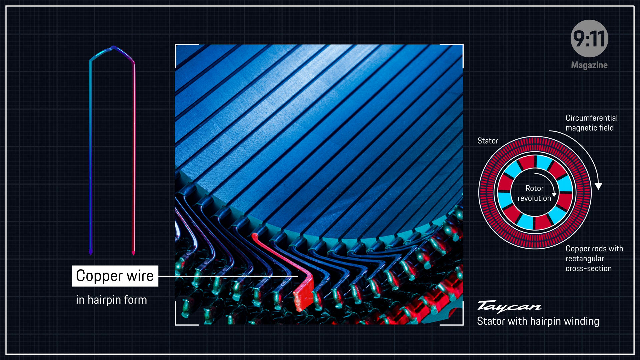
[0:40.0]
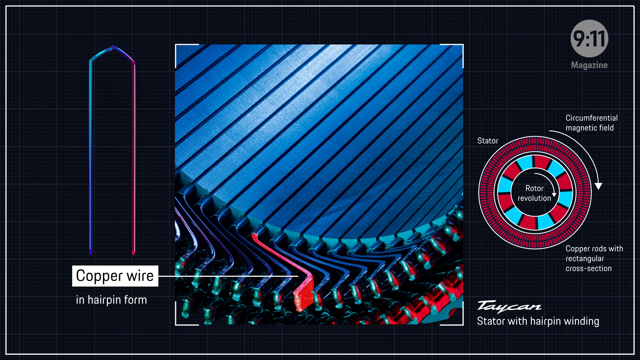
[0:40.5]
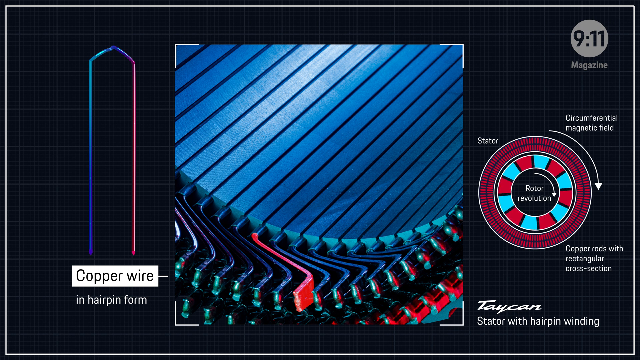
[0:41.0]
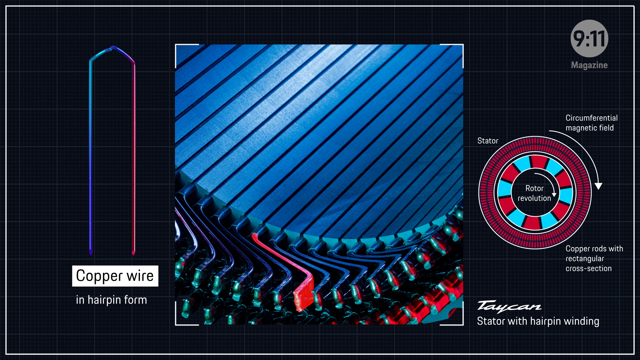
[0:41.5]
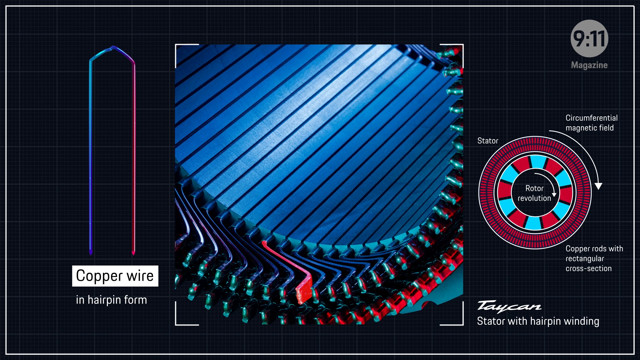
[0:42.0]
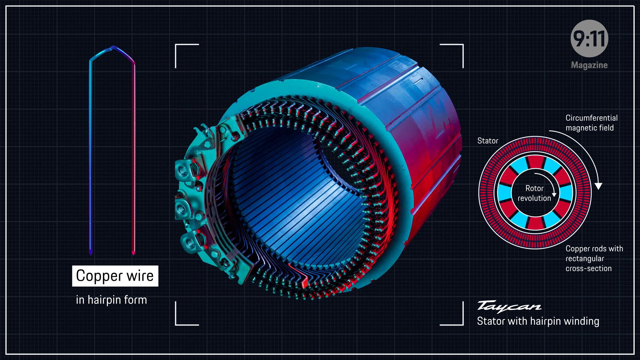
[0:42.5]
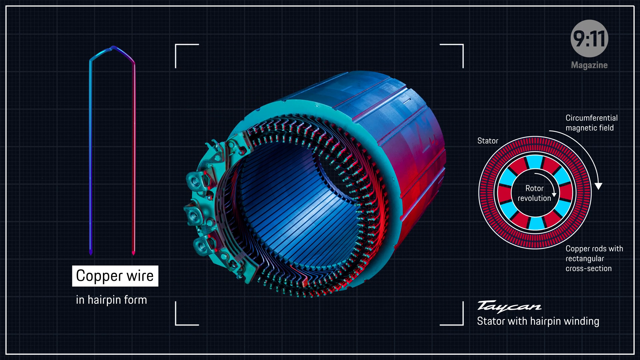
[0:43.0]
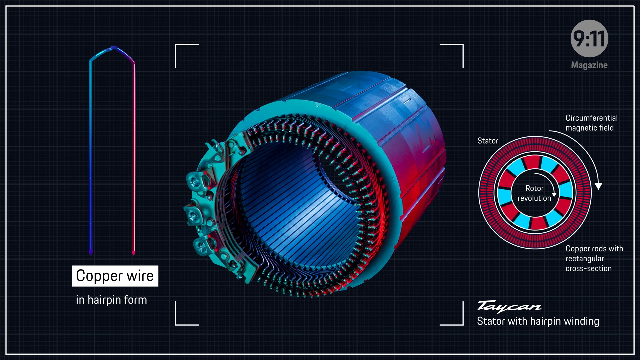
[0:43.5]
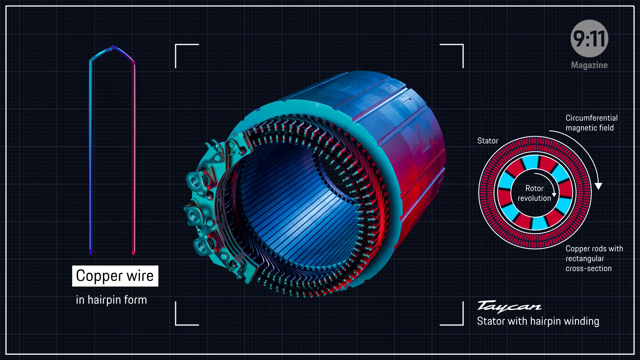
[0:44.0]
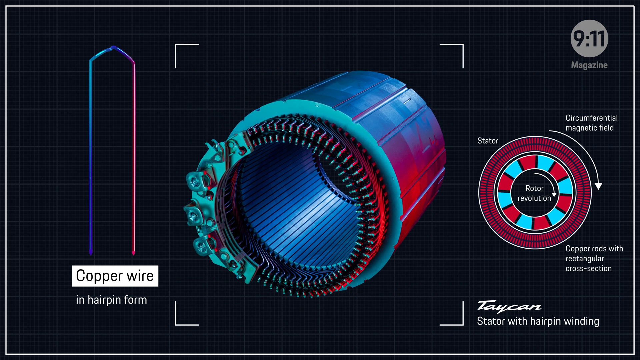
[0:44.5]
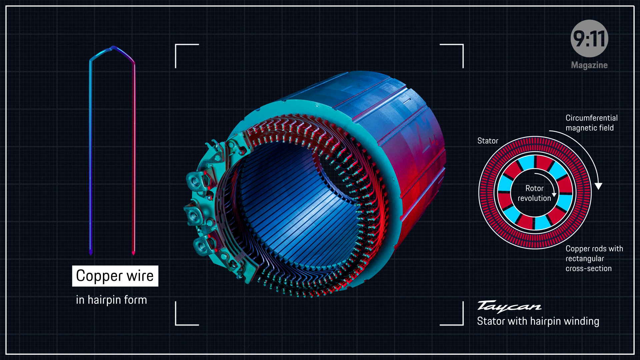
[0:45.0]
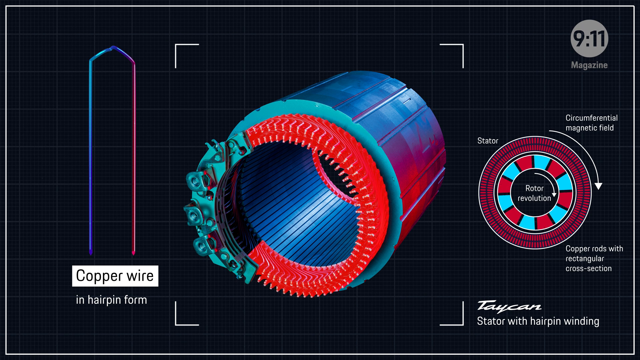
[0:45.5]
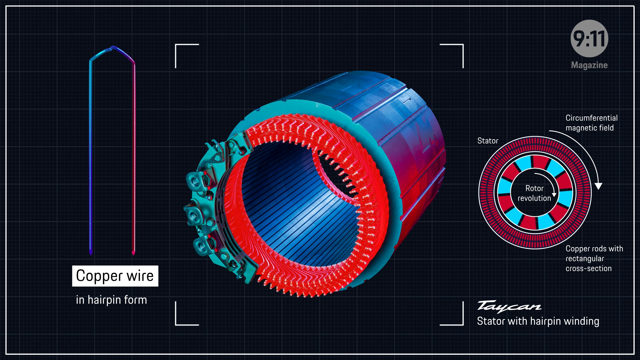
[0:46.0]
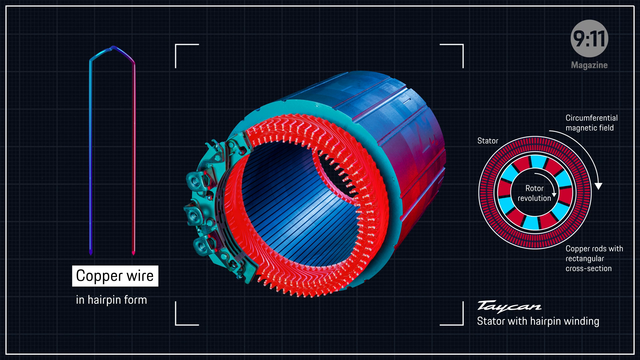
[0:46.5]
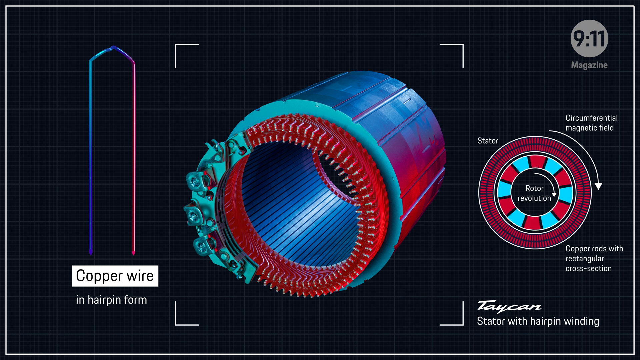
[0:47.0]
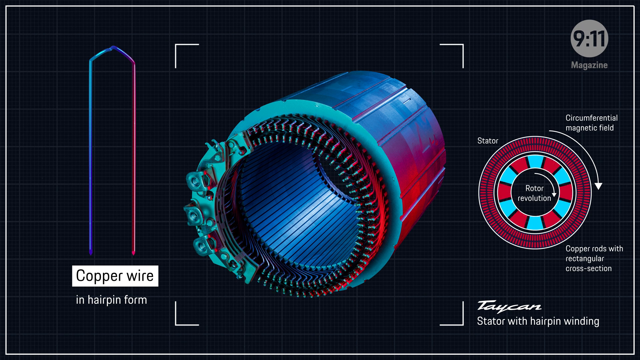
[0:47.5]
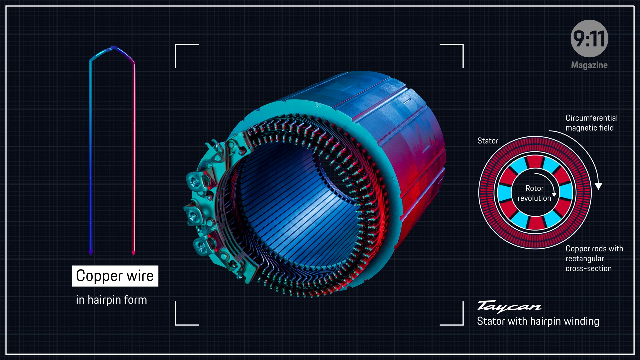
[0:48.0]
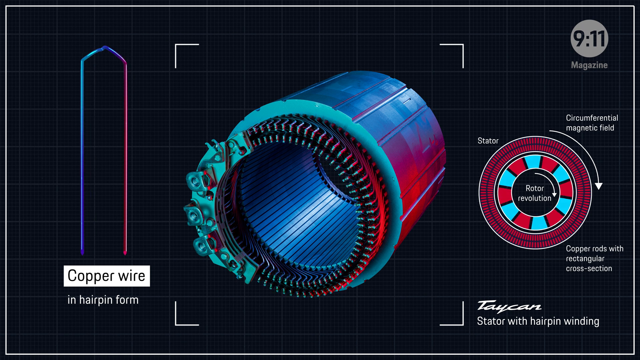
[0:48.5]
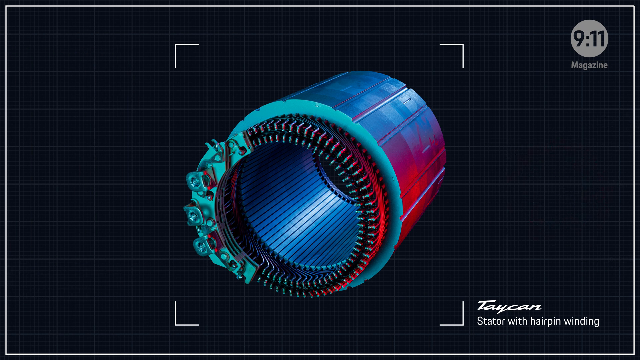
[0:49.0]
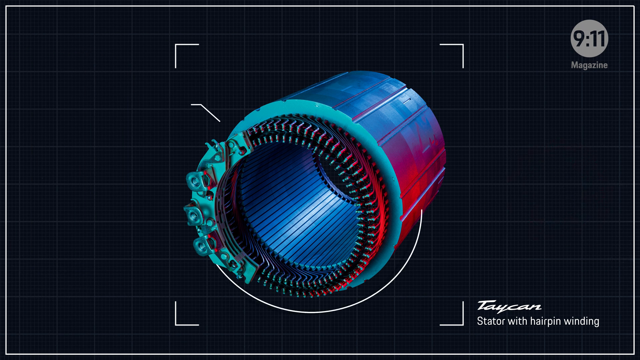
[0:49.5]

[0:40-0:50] The copper wires in hairpin form turn red and go round clockwise, which is the rotor revolution. There is also a rectangular shape, with something like a pencil on top showing arrows. One of the hairpin copper wires was red before the others turned red; it is possibly connected to electricity, since it is the only one that was red. The "9 to 11 magazine" text, which was written in red, is now written in white.